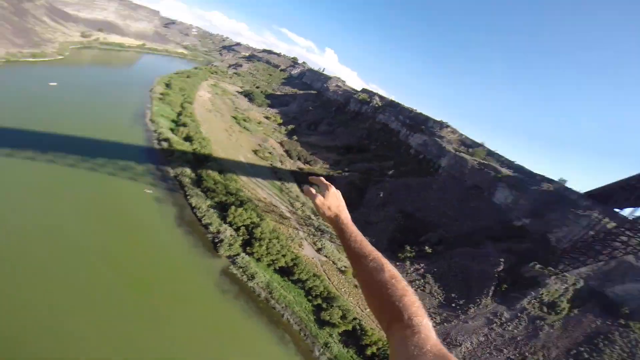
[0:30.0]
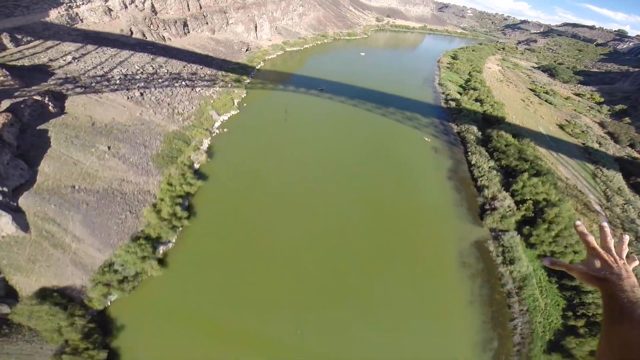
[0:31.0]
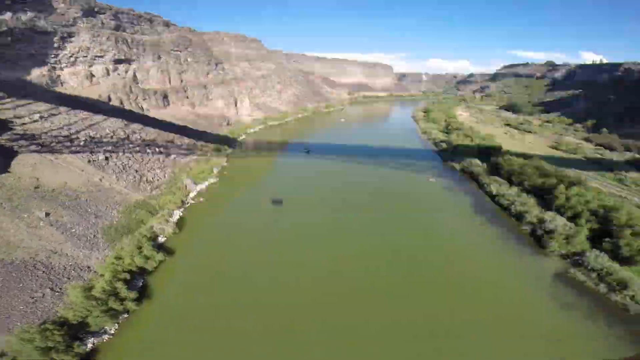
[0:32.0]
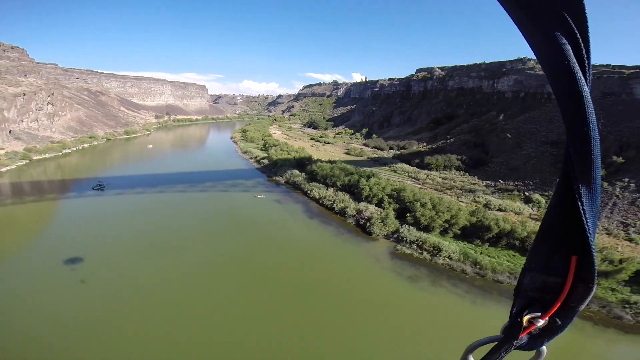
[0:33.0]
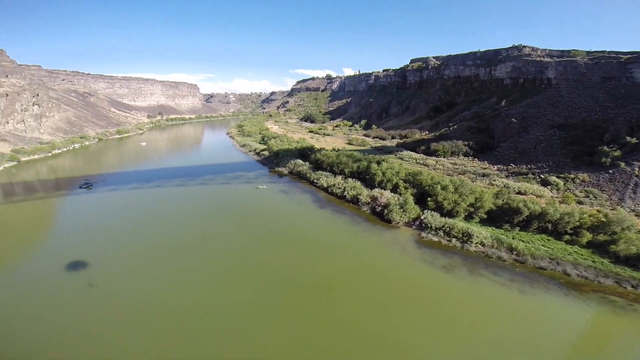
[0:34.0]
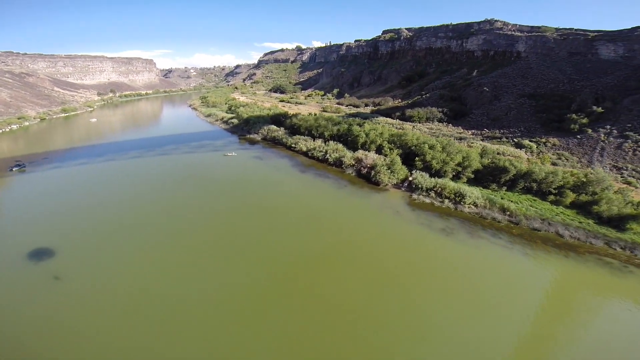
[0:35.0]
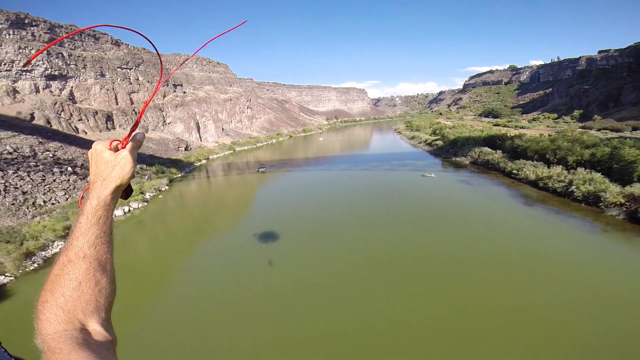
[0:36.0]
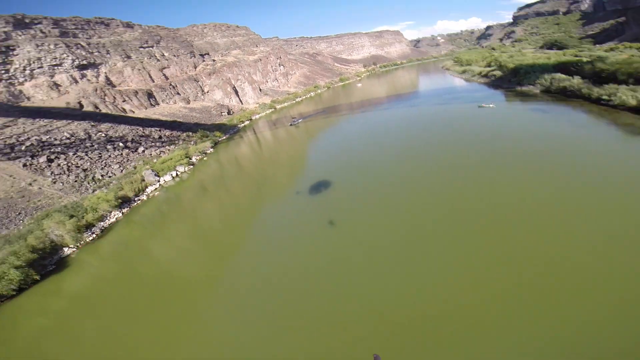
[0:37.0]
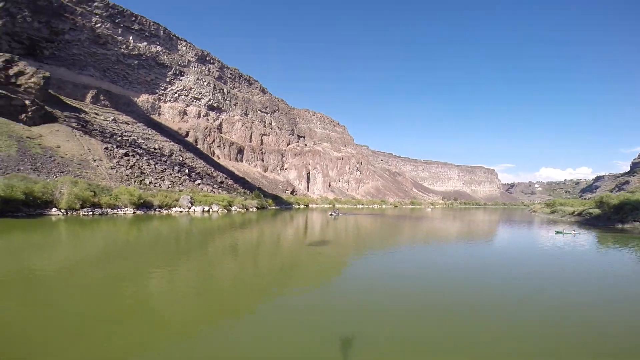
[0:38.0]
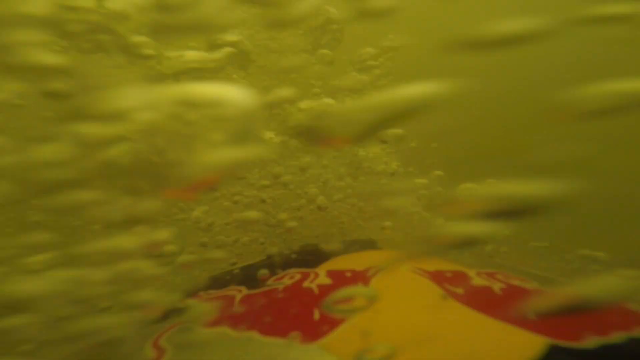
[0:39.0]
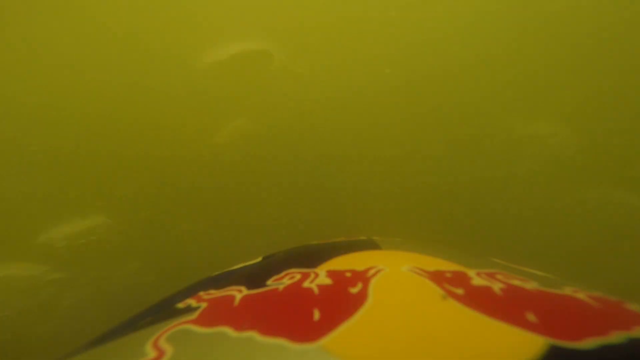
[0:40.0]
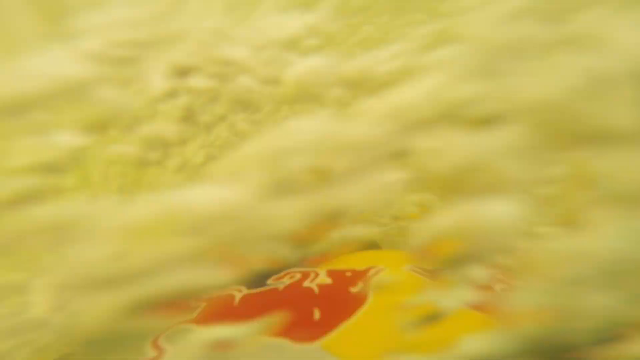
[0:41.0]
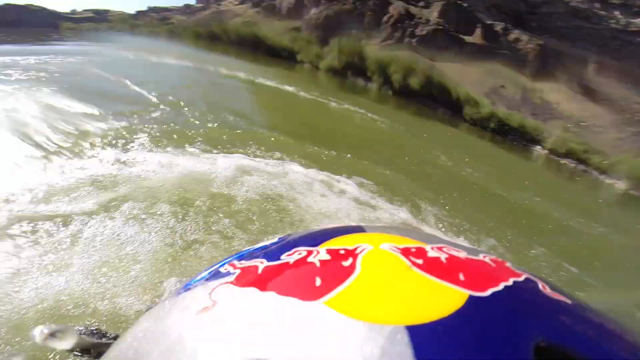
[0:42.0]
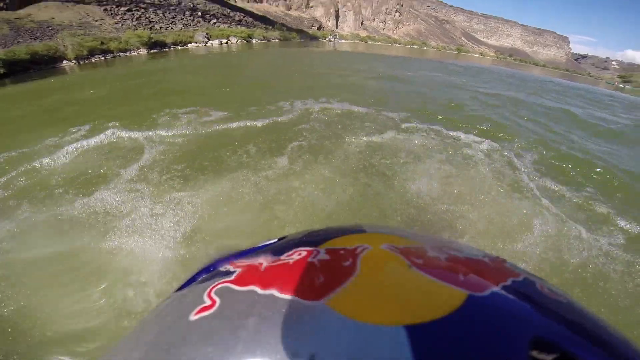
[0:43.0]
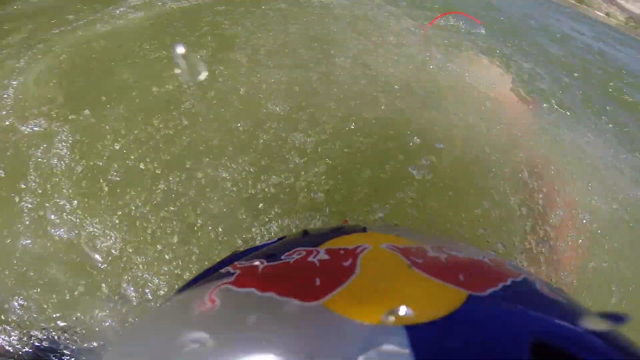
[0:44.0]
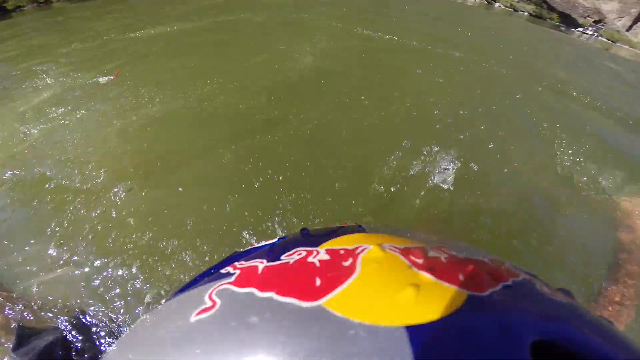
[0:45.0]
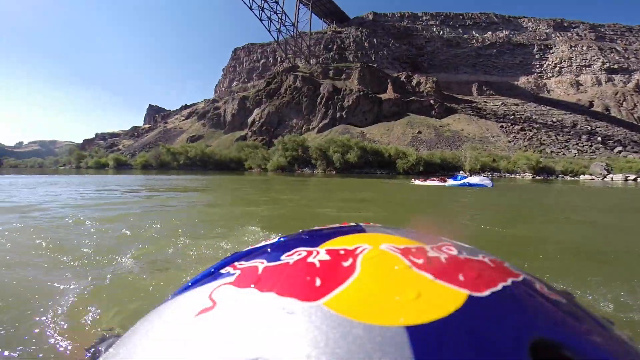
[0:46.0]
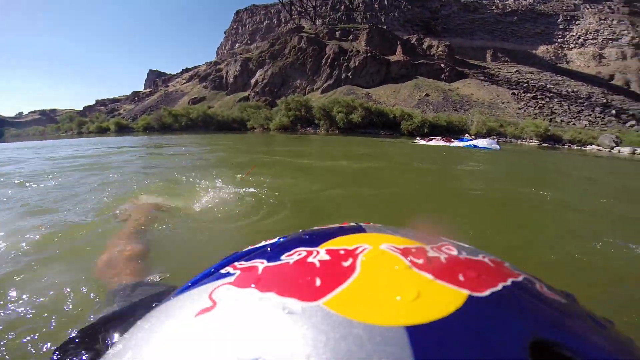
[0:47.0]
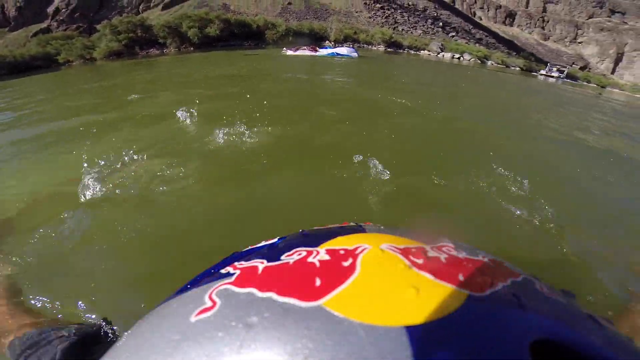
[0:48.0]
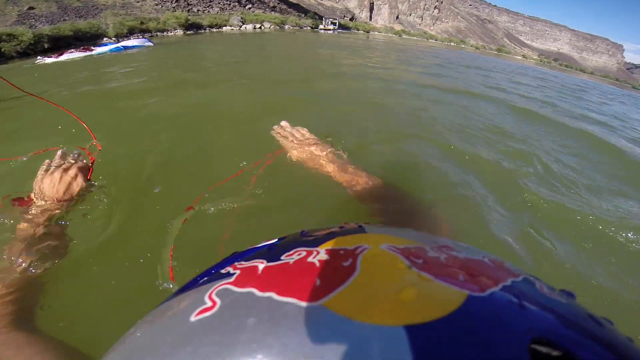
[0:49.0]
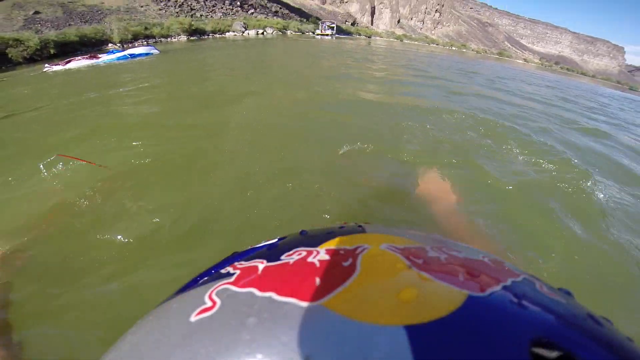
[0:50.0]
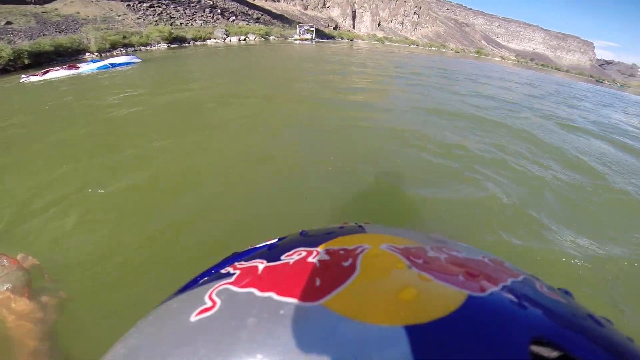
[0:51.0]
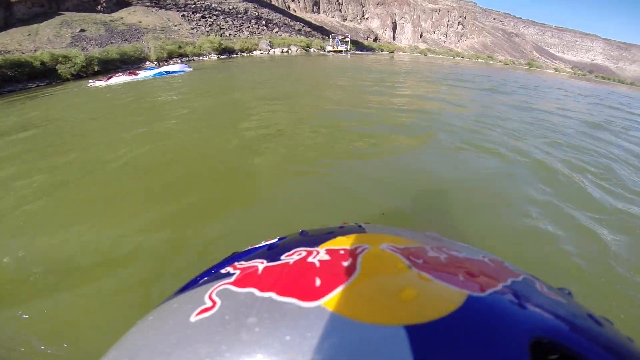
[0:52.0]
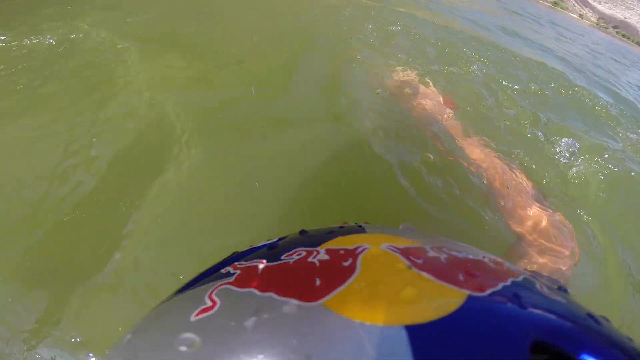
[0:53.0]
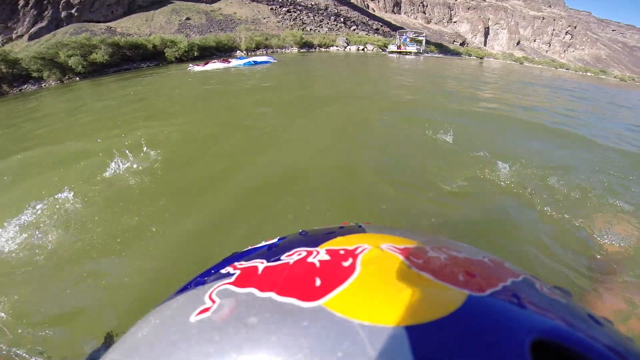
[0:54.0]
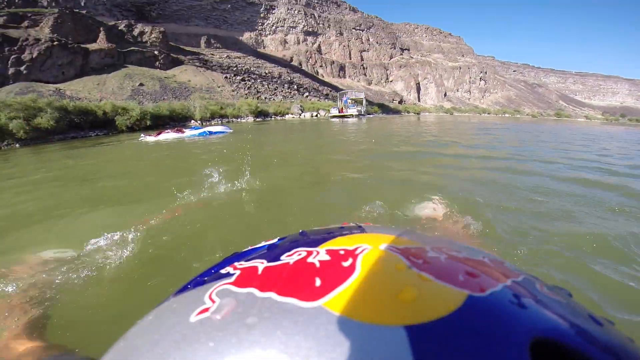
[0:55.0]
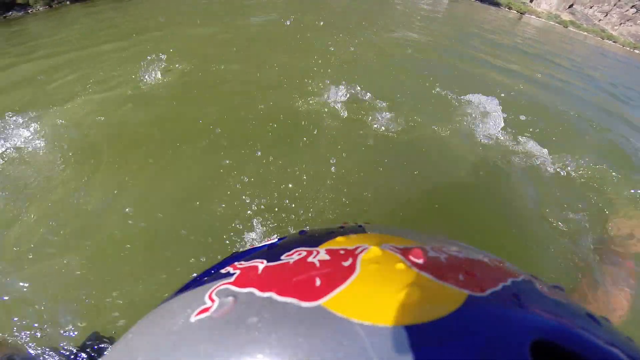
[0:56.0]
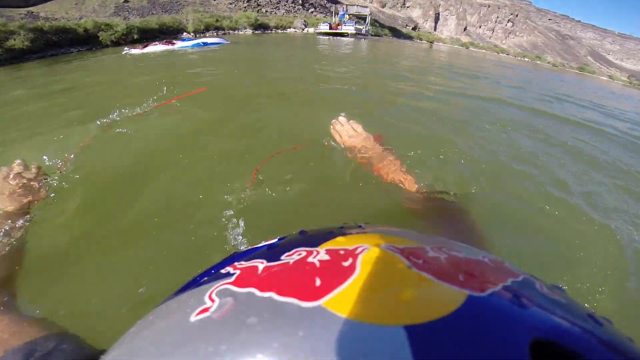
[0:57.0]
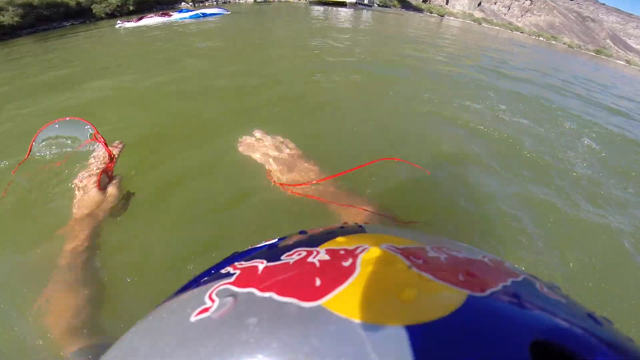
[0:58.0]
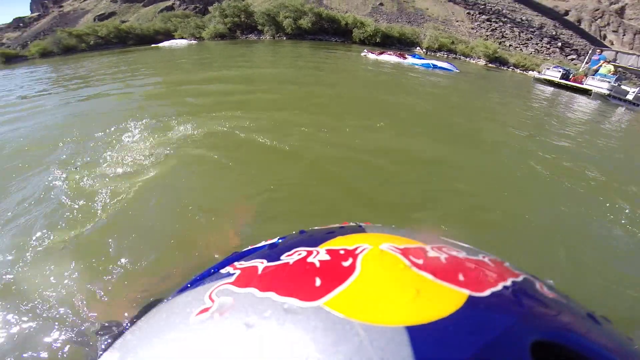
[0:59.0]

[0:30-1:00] The person jumps off the bridge, immediately tosses up the parachute and glides down, seemingly pretty fast. The silhouette of the parachute's shadow is visible on the river below, and the person's left arm sticks out a little. On the left side there is nothing but a canyon-like structure, with no buildings apparently around. The person puts both hands together, apparently to brace as they crash into the water. The water is cloudy, but what looks like the Red Bull logo is visible, apparently on the person's helmet, and their arms move back and forth as they are partially submerged in the river. There seems to be some type of vessel, maybe a boat, which they seem to be gravitating towards.